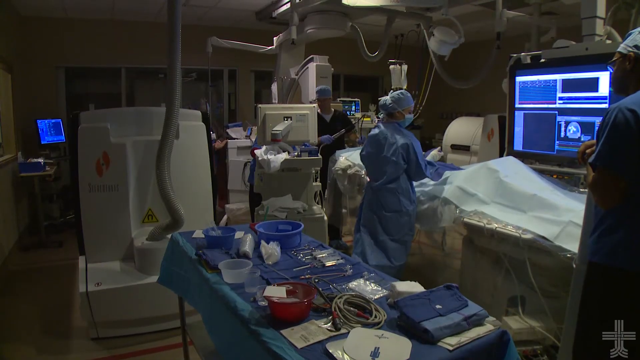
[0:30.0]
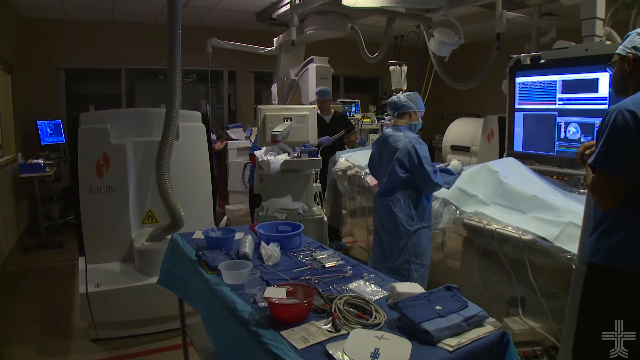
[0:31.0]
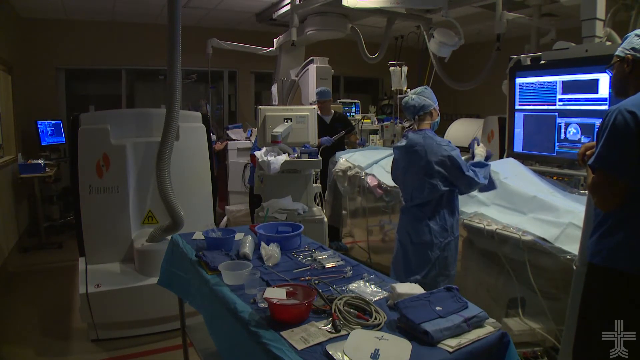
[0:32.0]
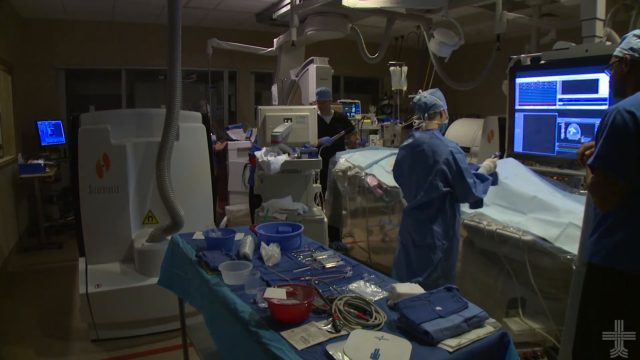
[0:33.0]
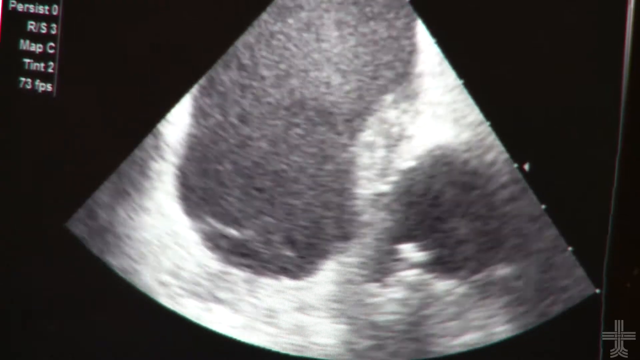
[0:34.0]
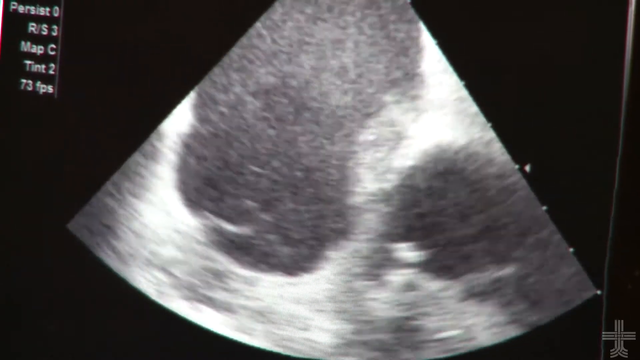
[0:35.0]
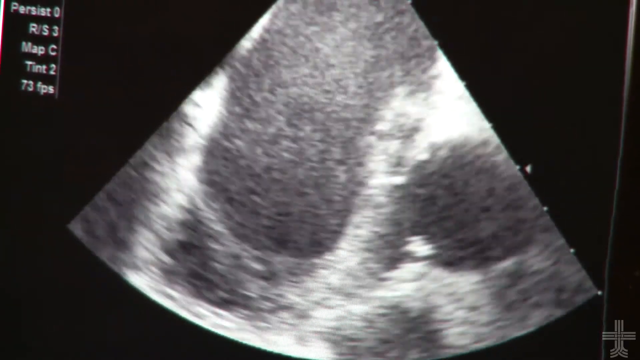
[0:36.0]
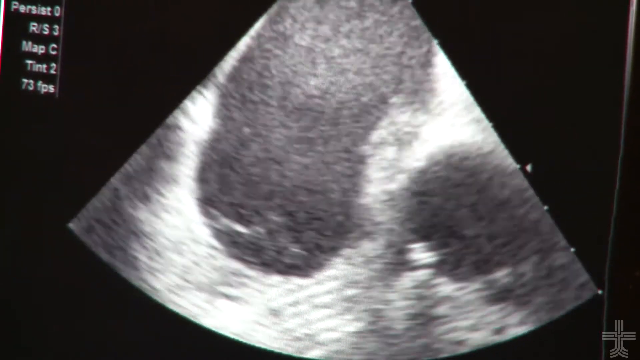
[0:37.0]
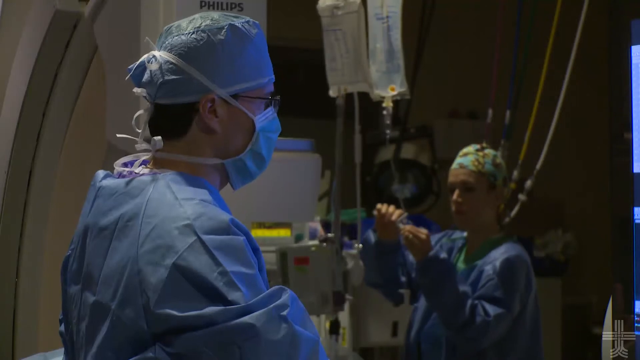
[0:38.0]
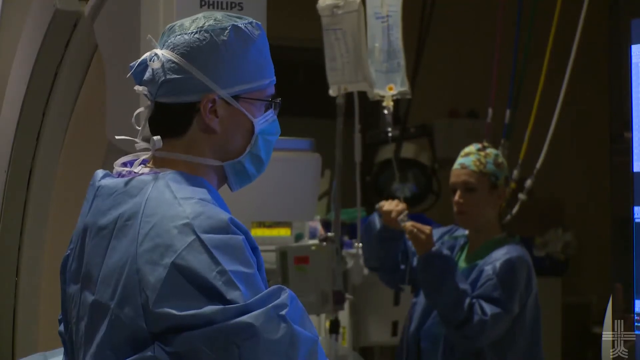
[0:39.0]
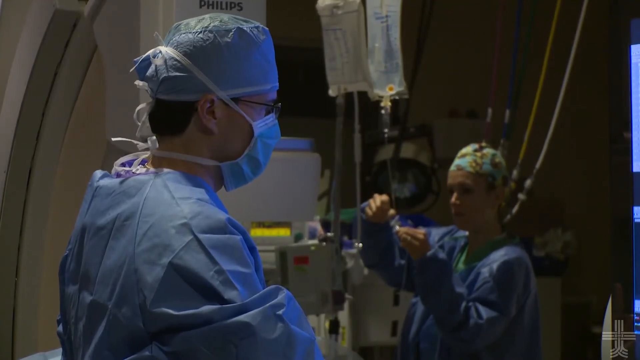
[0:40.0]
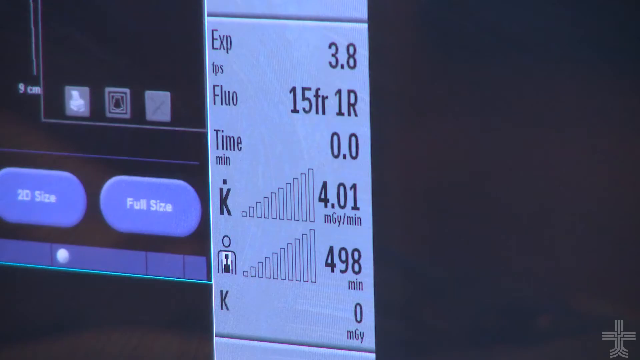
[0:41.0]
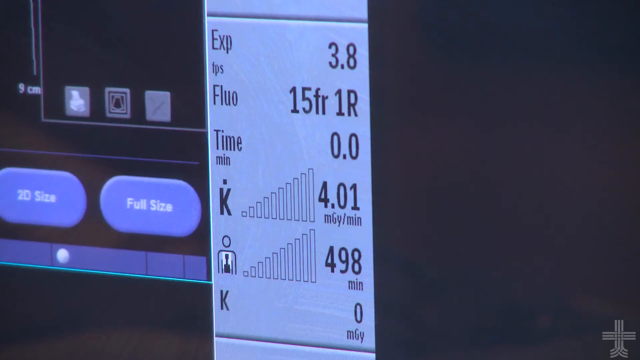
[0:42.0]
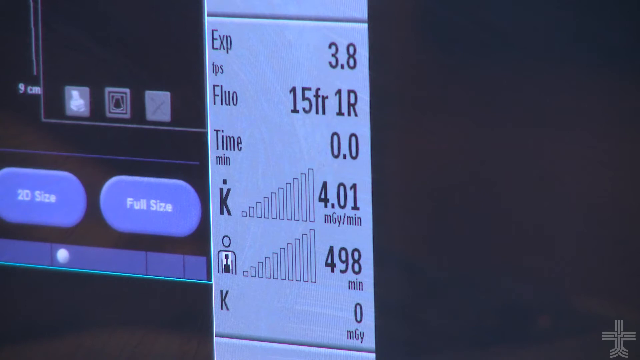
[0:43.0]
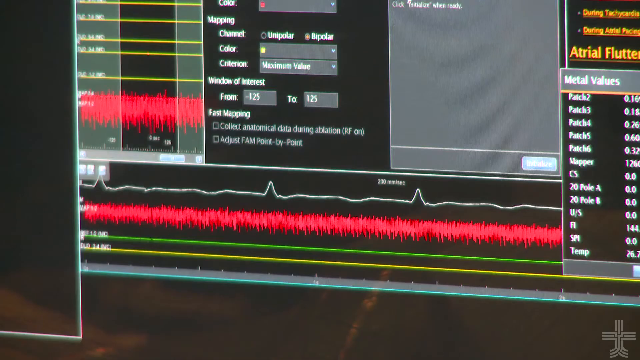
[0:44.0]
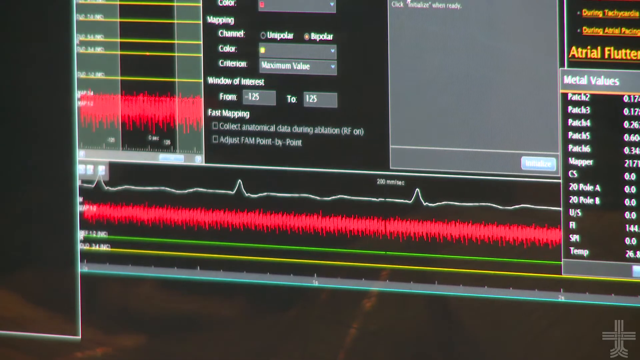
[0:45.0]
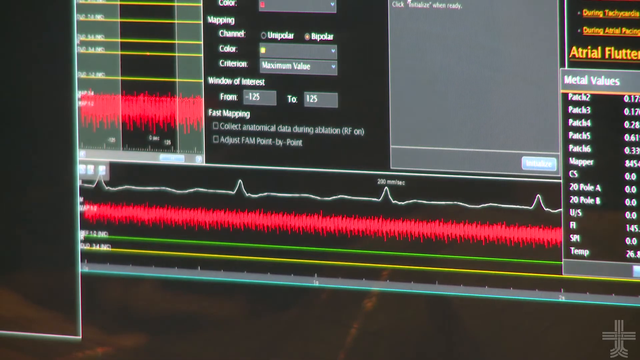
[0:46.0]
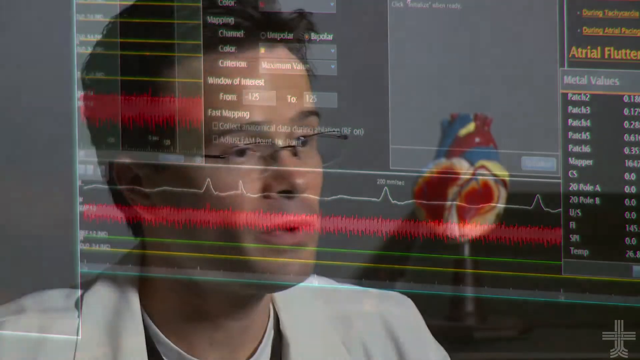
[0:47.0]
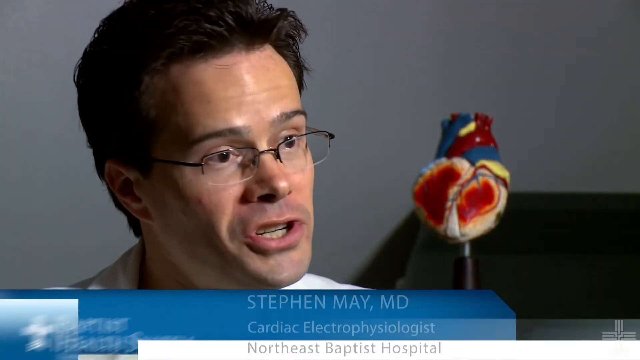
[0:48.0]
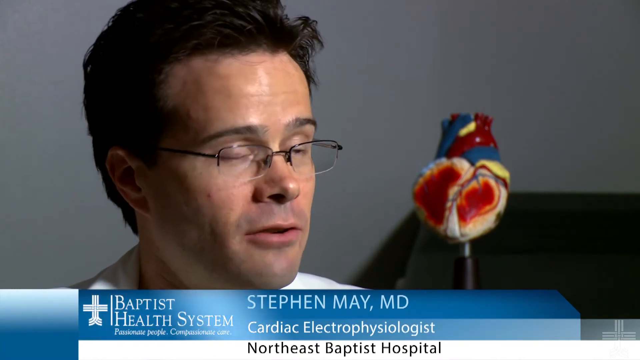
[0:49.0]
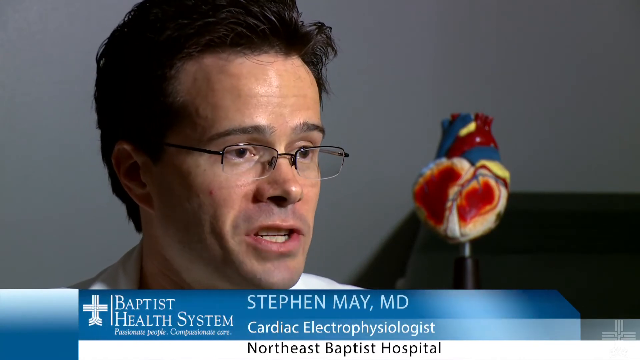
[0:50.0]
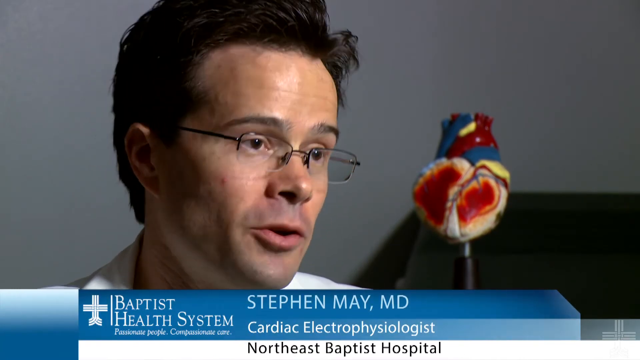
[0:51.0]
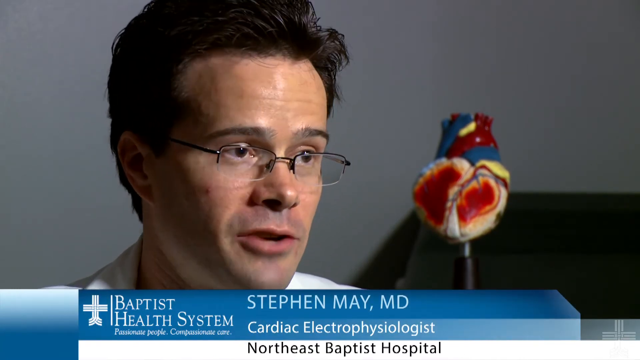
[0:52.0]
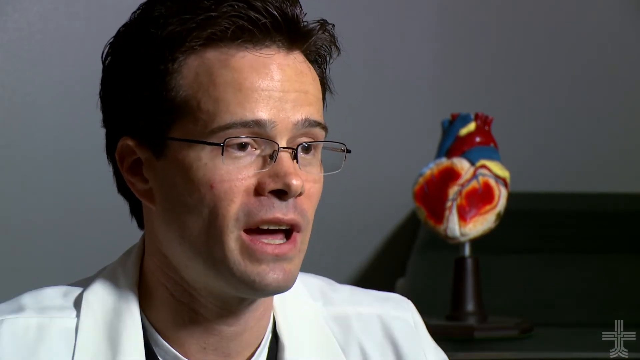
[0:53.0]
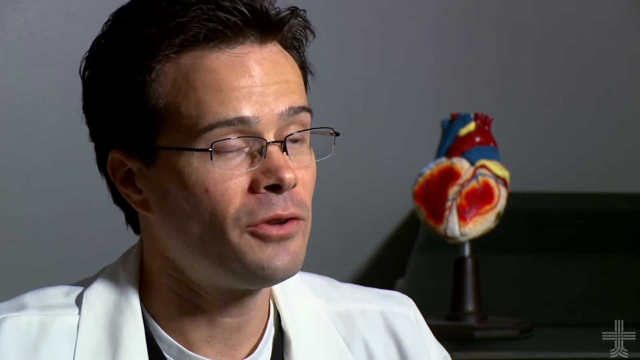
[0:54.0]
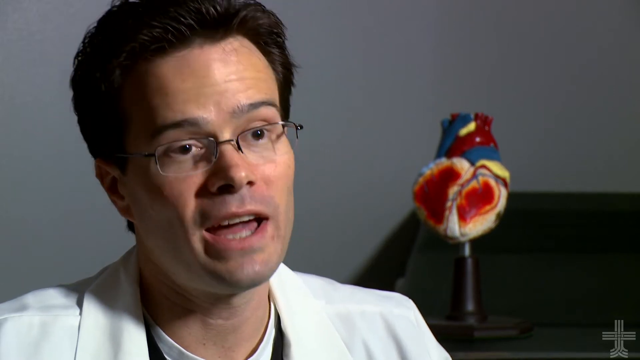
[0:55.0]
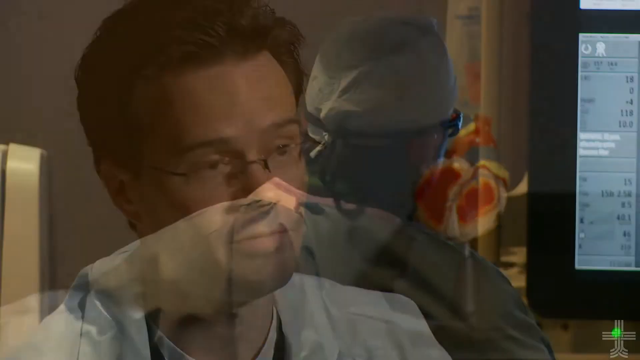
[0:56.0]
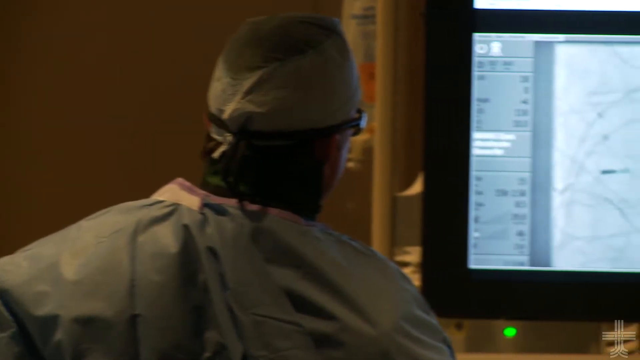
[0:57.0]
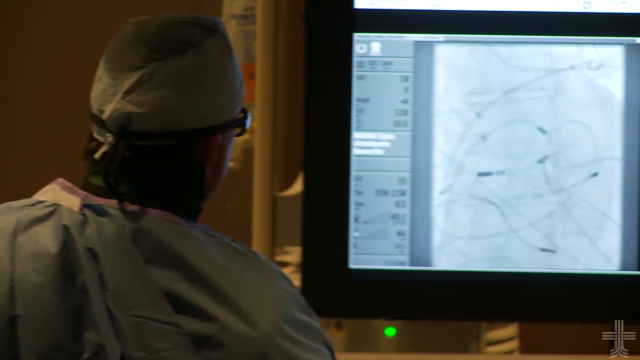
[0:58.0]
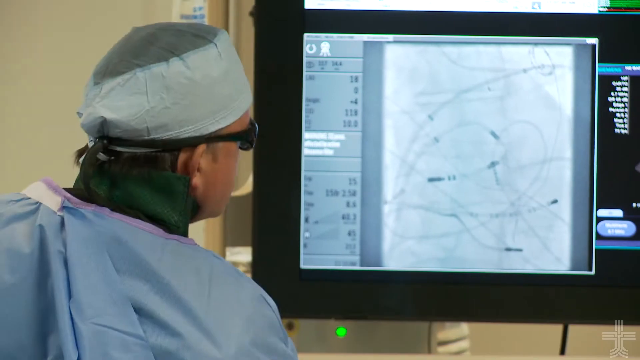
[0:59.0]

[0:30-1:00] In an operating or procedure room, what is probably a patient lies on the table, covered by surgical paper. A table has blue absorbent paper stretched over it, with many different pieces of medical equipment on it. A female medical professional wears scrub gear with a surgical gown over it, a mask and a scrub cap. Two other individuals, both male, are in the room, one light-skinned and one dark-skinned, both in scrub caps; one wears a blue scrub shirt and darker pants, the other a black scrub shirt over what looks like a white undershirt. They are looking at what might be an ultrasound of some sort, on which something seems to be moving, possibly a heartbeat. The view shifts to what looks like the doctor from the opening scene in surgical gear, with a scrub cap, scrub gown and a mask over his face, his glasses very similar. A female medical professional in the background, wearing a scrub cap, puts something into an IV line. What looks like a heart meter and a piece of medical equipment come into view, and a heartbeat is visible. The view then switches to the doctor from the original scene speaking to the camera, once again in his lab coat; he is Stephen May, MD, a cardio electrophysiologist in the Baptist Health System. He continues talking to the camera with a model of a heart in the background. The view then shifts back to the procedure room, looking at a monitor as the procedure happens.